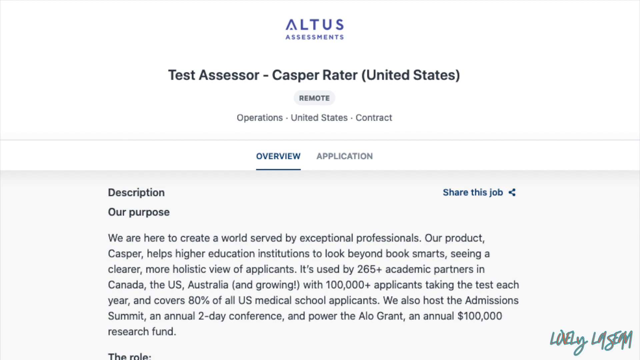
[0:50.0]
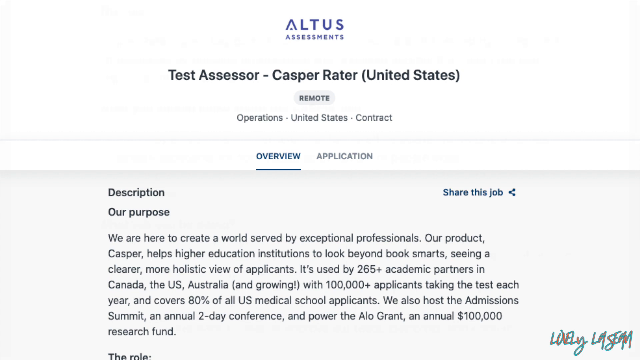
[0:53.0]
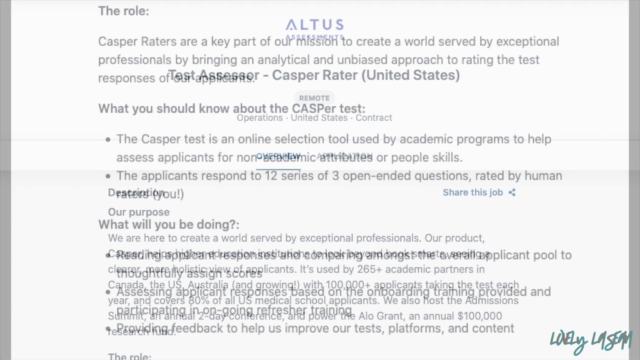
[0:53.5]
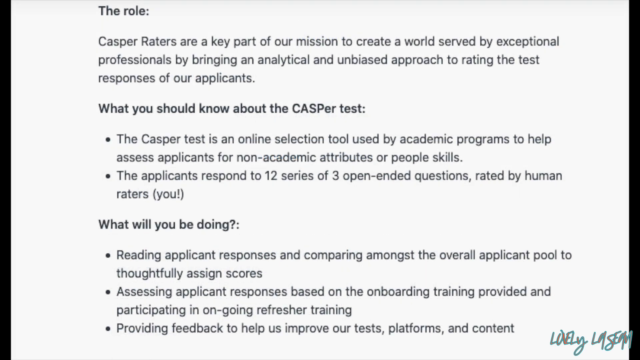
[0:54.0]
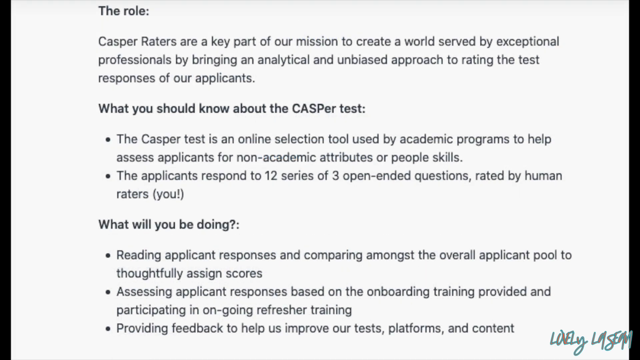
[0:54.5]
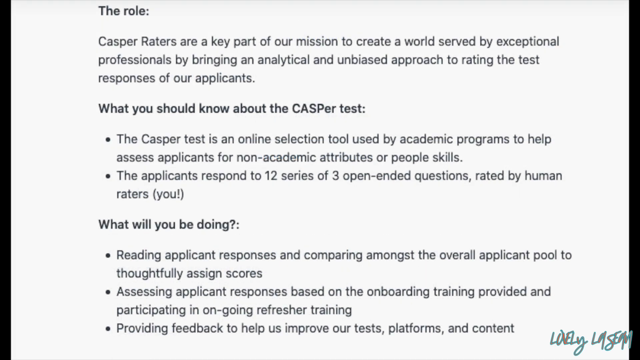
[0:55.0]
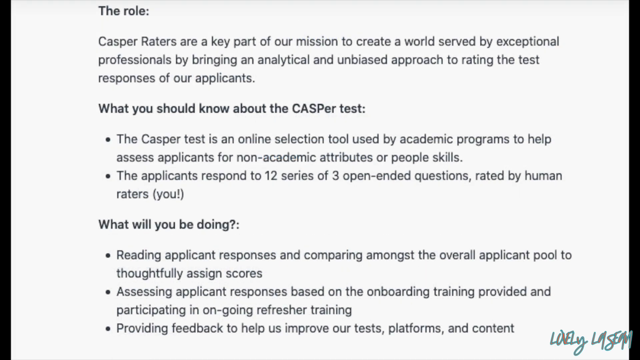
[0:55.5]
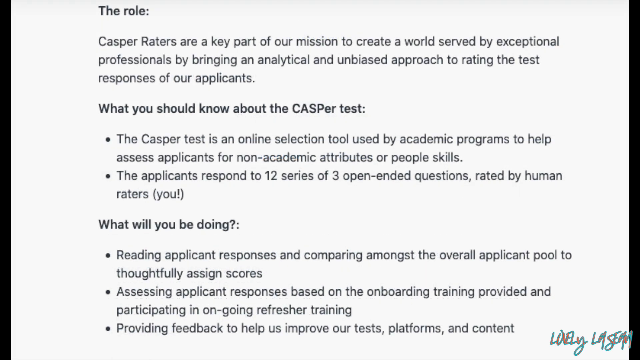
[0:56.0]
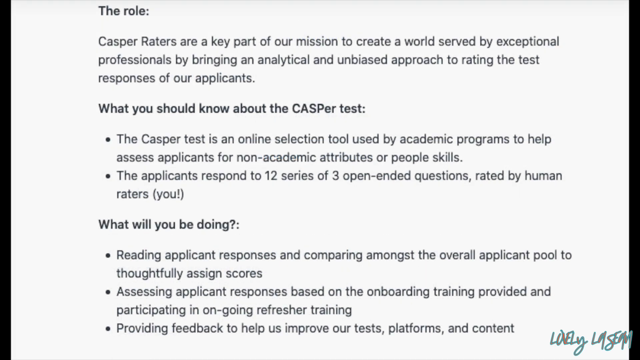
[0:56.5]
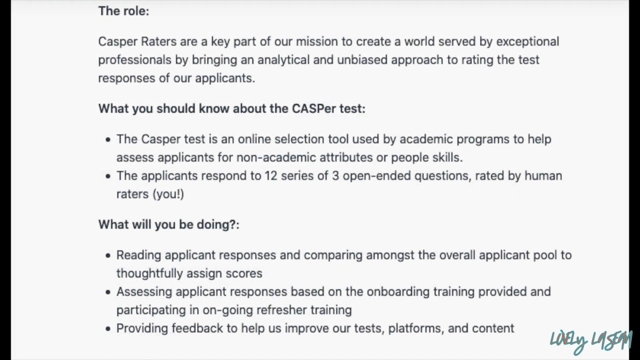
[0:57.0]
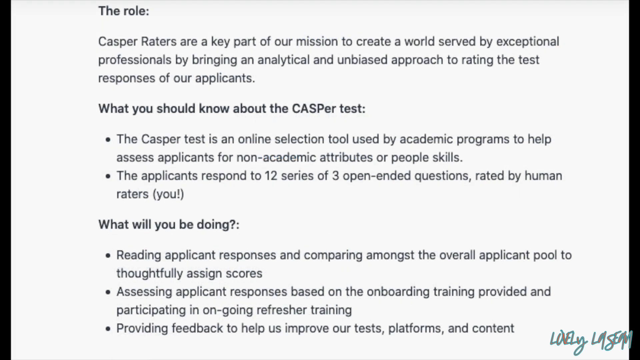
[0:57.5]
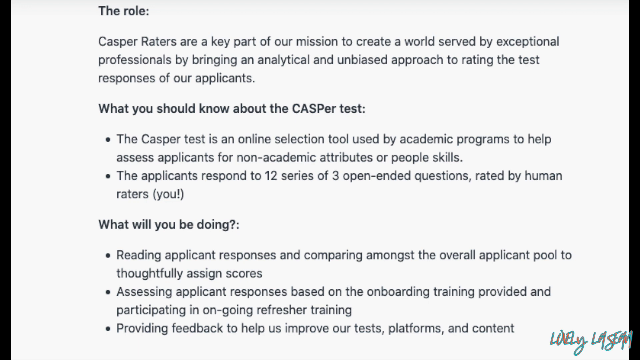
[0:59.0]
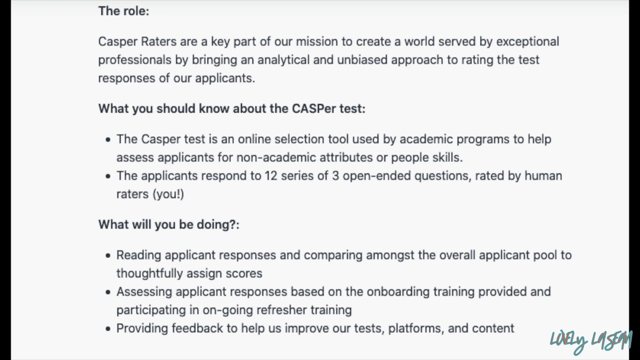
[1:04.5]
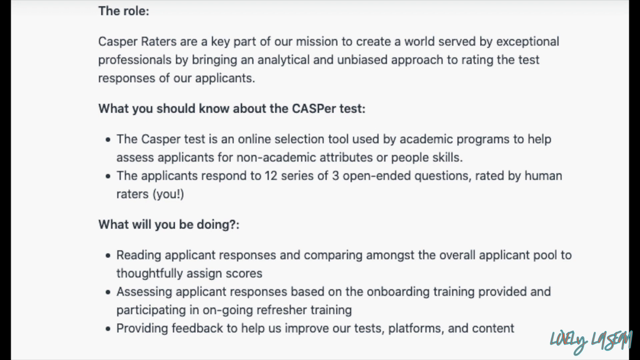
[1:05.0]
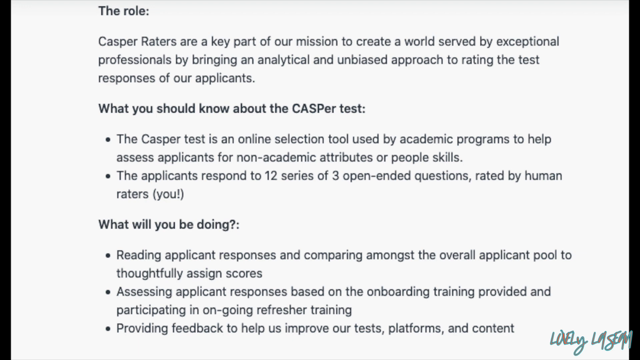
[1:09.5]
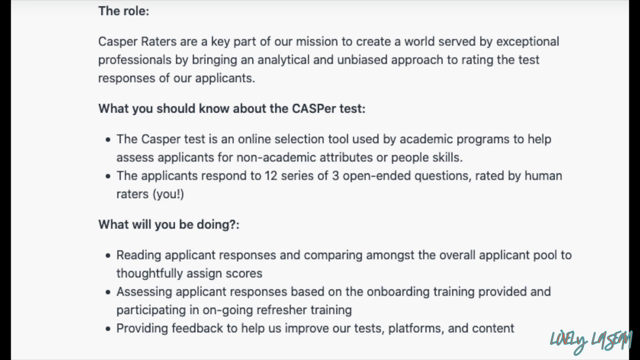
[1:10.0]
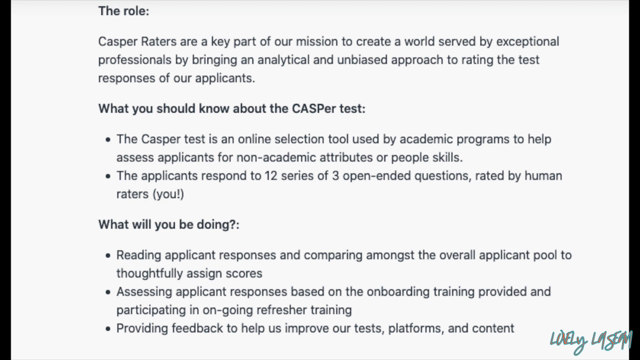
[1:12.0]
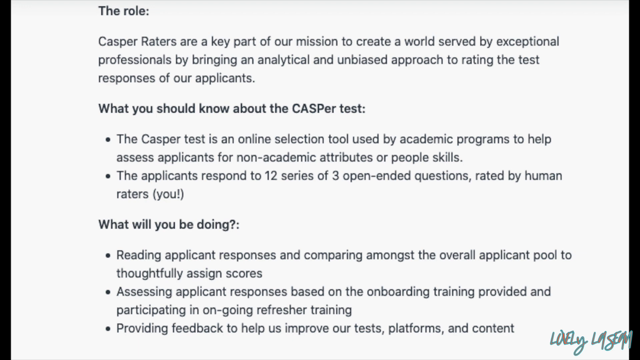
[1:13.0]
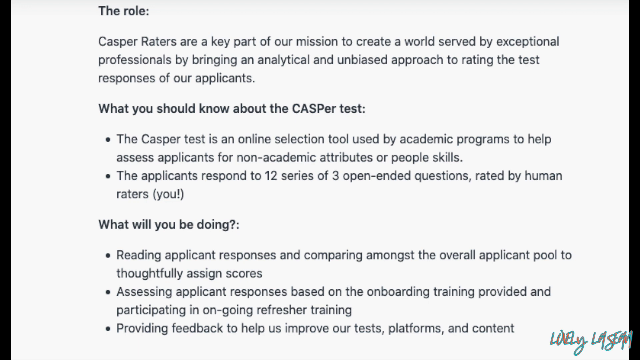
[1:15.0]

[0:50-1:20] The video description text continues with a section on the role: "The role of CASPer raters are a key part of our mission to create a world served by exceptional professionals by bringing an analytical and unbiased approach to rating the test responses." A heading asks "What we should know about the CASPer test?" and the text explains that "The CASPer test is an online selection tool used by academic programs" for "non-academic attributes or people skills," and that "The applicants respond to 12 series of 3 open-ended questions." Another heading reads "What will you be doing?" followed by a list beginning "Examining applicant responses and comparing among the overall applicant pool."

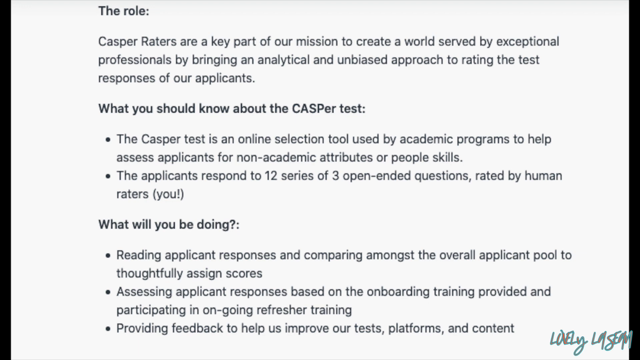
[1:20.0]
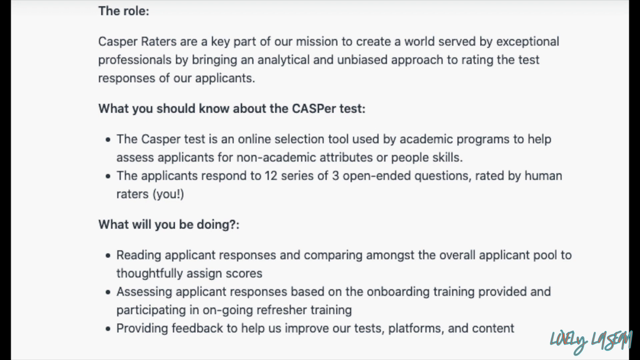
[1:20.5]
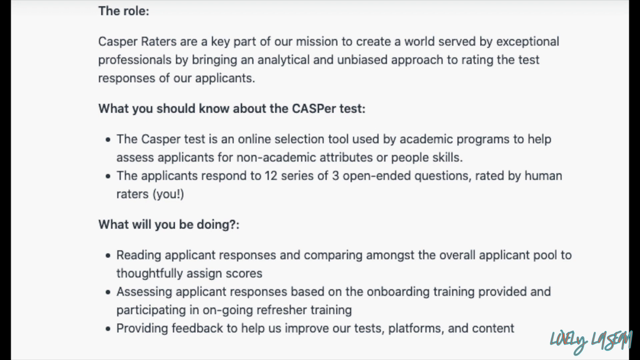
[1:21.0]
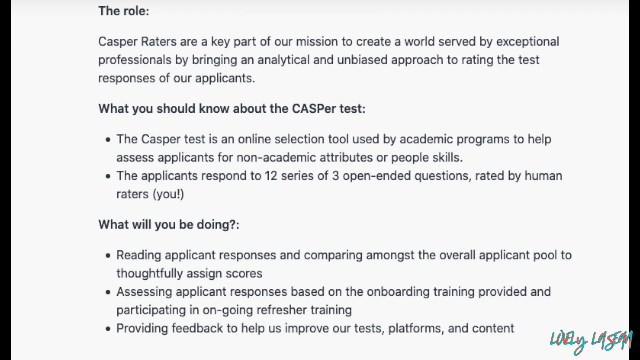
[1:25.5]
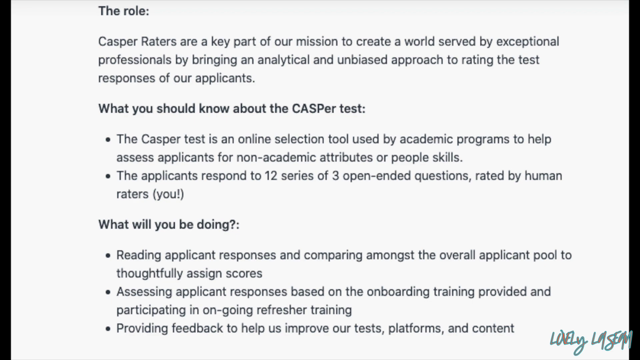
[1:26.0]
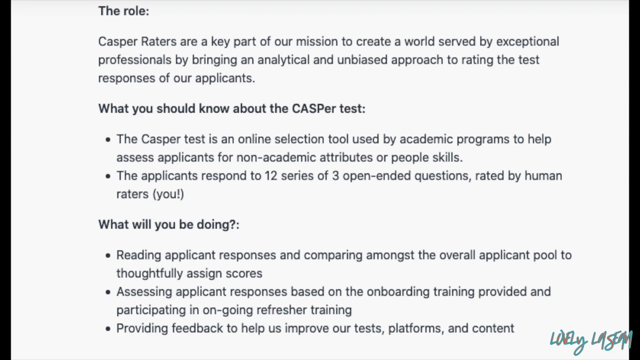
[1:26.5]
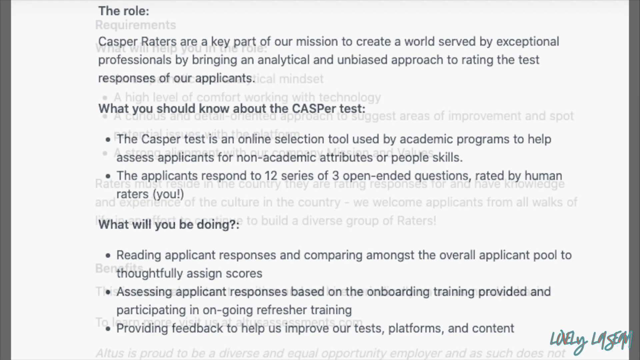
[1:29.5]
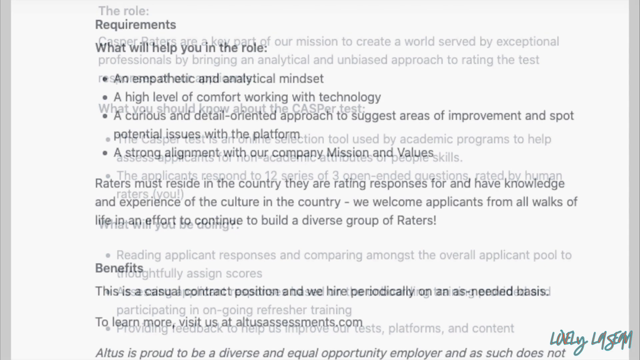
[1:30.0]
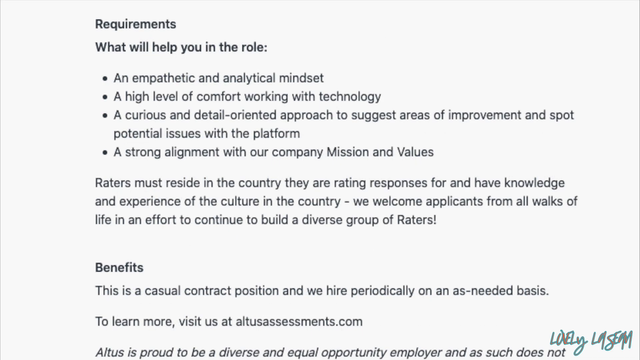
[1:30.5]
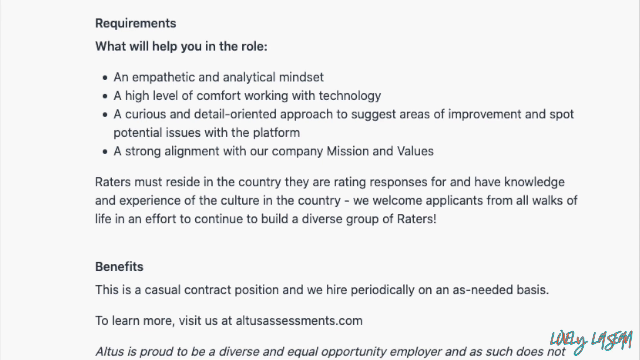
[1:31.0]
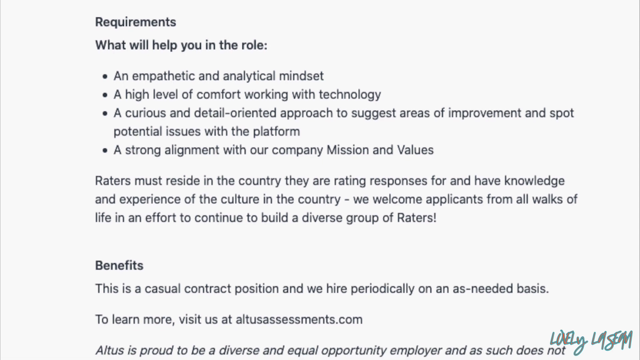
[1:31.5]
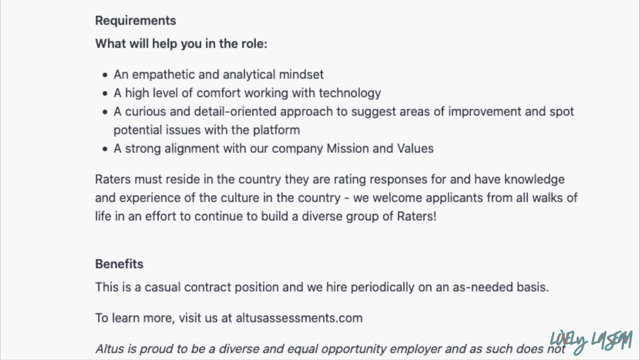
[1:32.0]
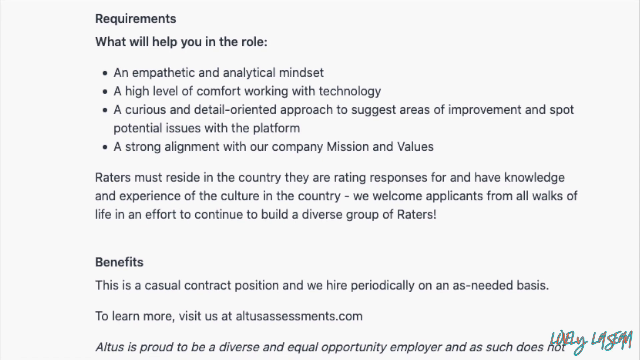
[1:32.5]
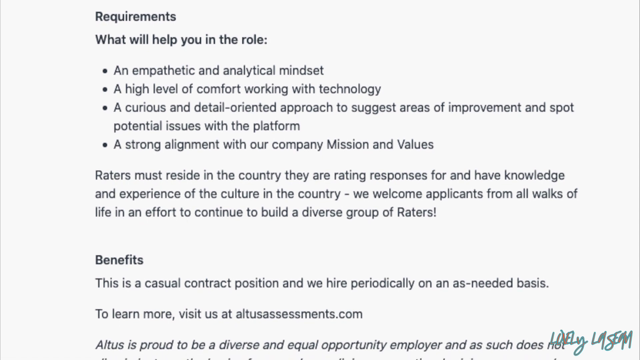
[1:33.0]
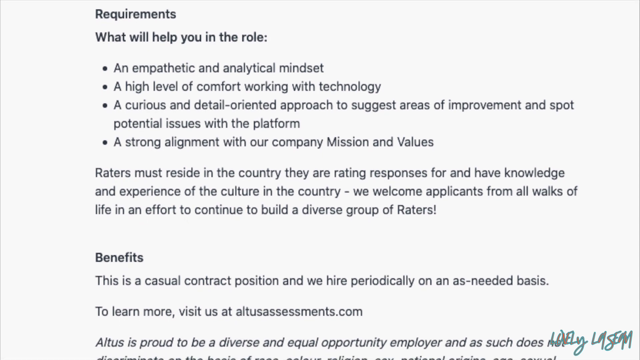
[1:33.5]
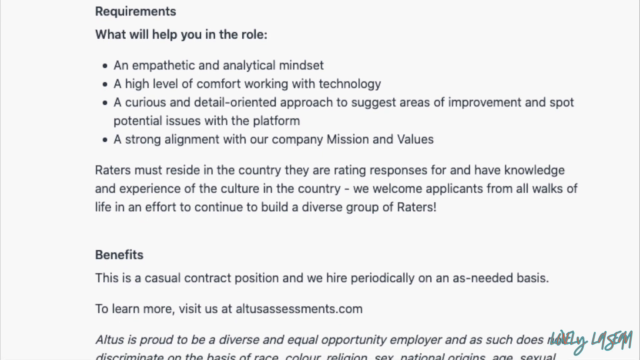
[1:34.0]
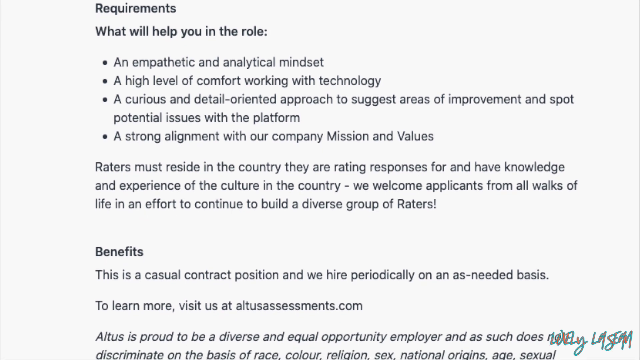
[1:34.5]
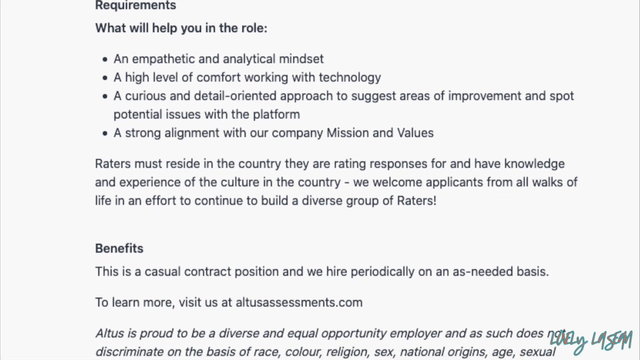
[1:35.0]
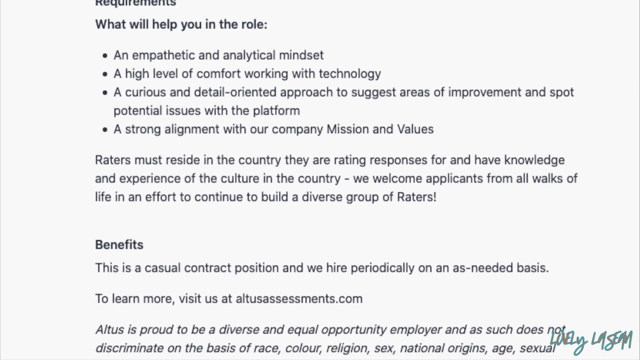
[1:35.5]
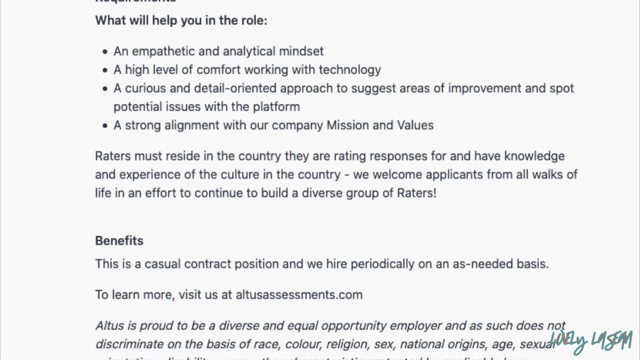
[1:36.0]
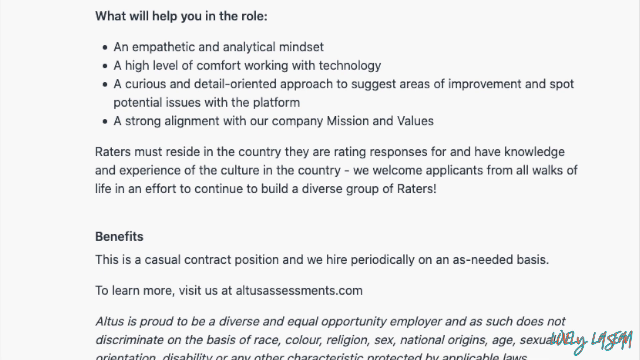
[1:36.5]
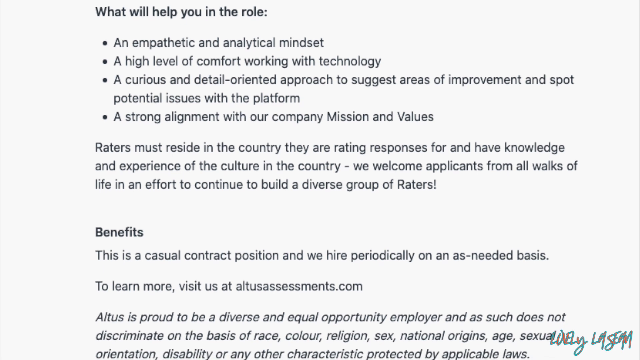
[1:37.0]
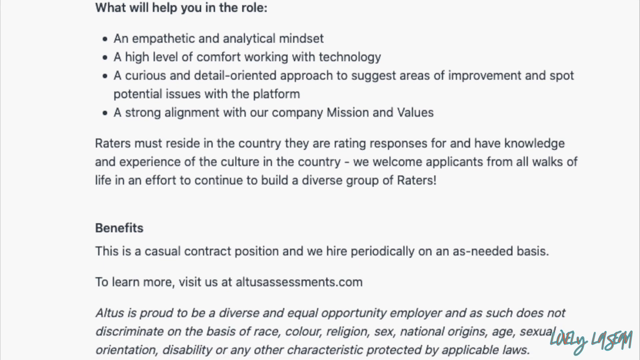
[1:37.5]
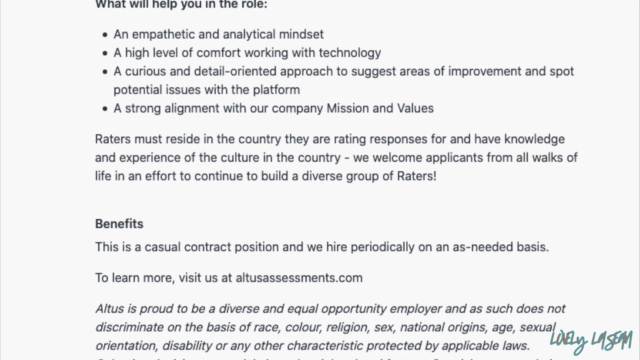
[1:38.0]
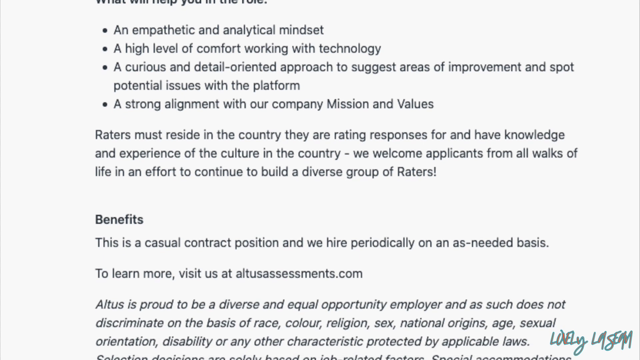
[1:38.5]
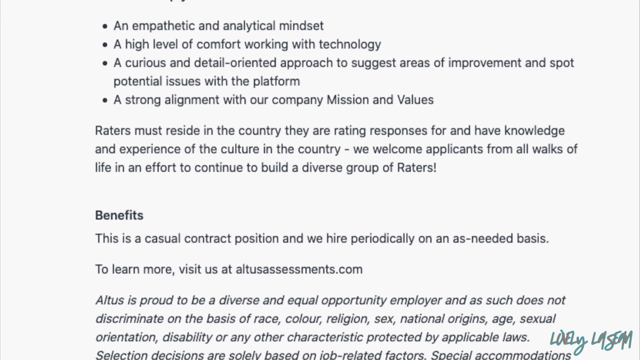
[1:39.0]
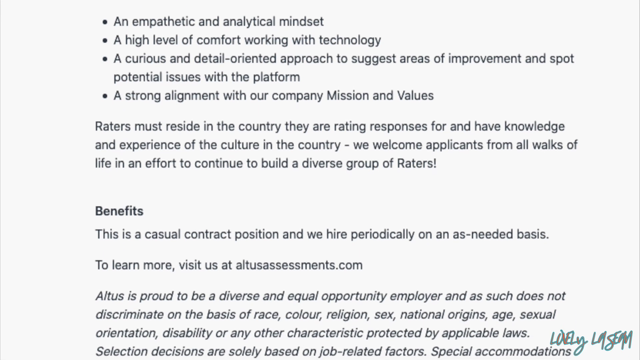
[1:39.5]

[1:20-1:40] The text shows "What you should know about the Kaspers test," describing it as "an online selection tool used by academic programs" for "non-academic attributes or people skills," with applicants responding to "12 series of three open-ended questions rated by human raters." Under "What will you be doing" the list includes comparing responses "among the overall applicant pool," assessing responses "based on the onboarding training provided and participating in ongoing refresher training," and "providing feedback to help us improve our test platforms and content." A requirements section follows, headed "What will help you in the role?", listing "a high level of comfort working with technology" and "a curious and detailed oriented approach to suggest areas of improvement and support potential issues with the platform."